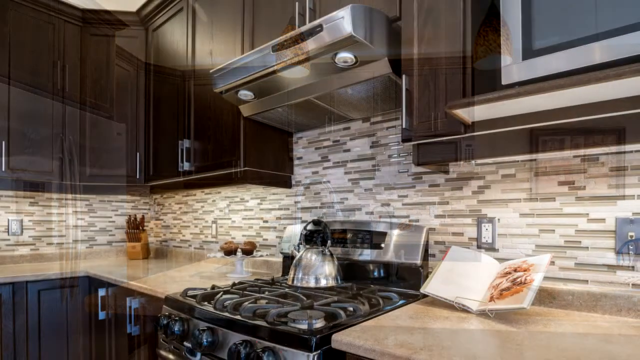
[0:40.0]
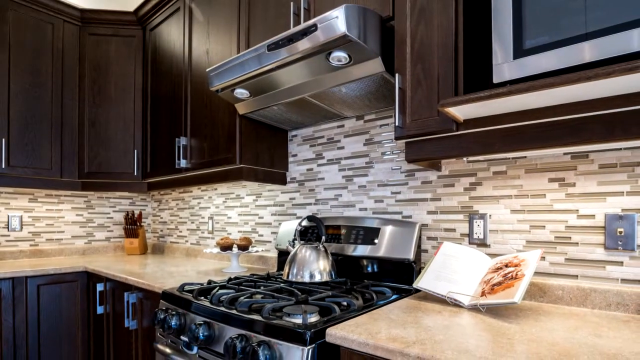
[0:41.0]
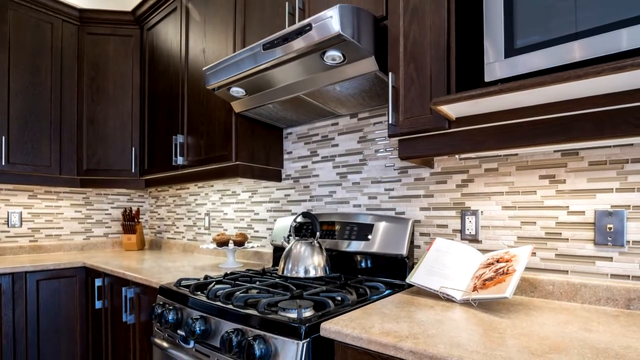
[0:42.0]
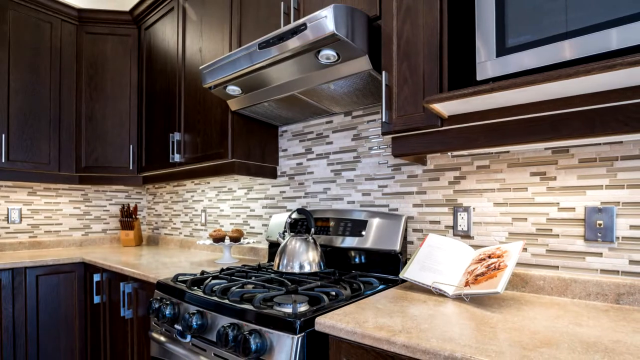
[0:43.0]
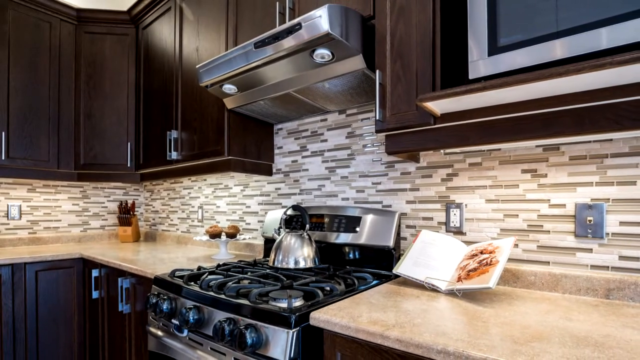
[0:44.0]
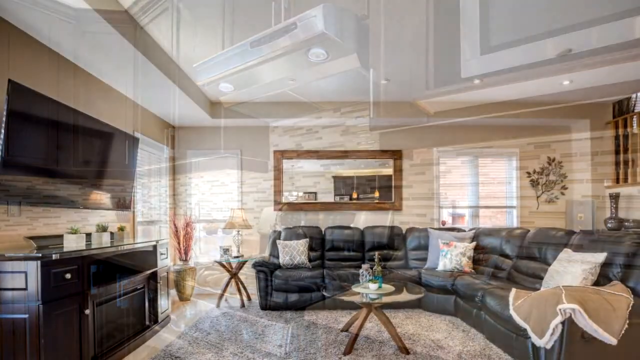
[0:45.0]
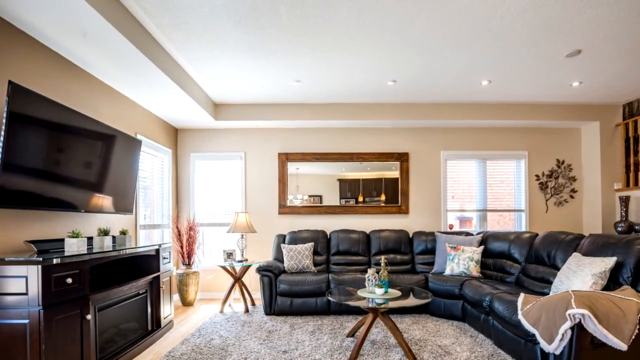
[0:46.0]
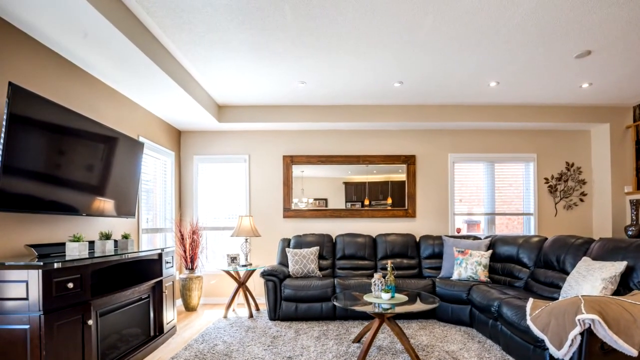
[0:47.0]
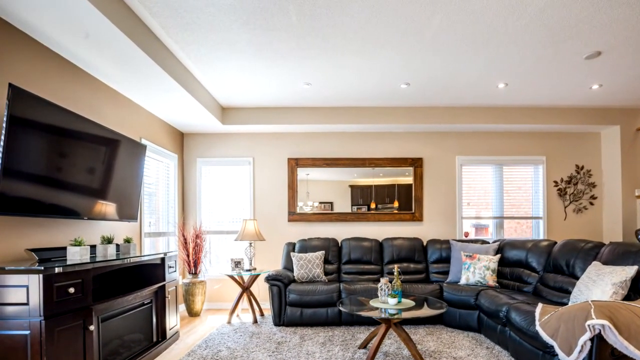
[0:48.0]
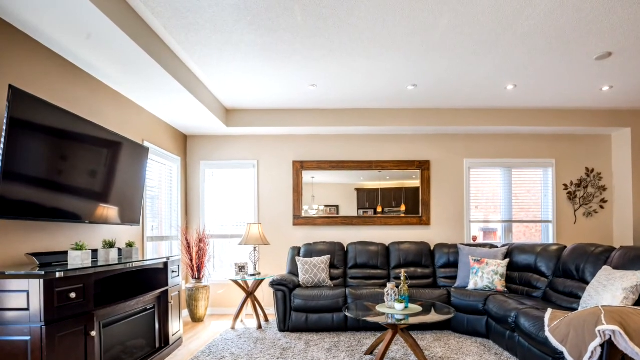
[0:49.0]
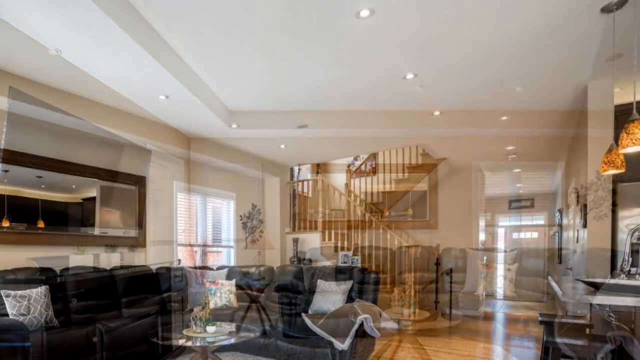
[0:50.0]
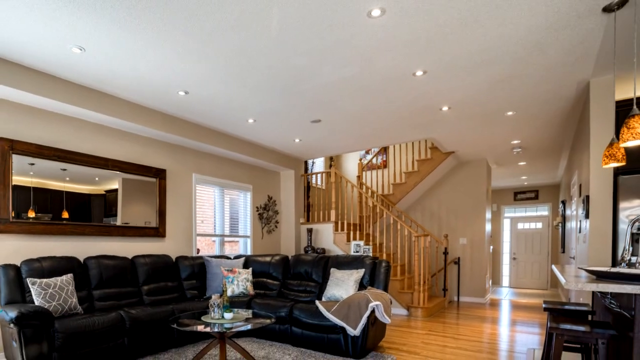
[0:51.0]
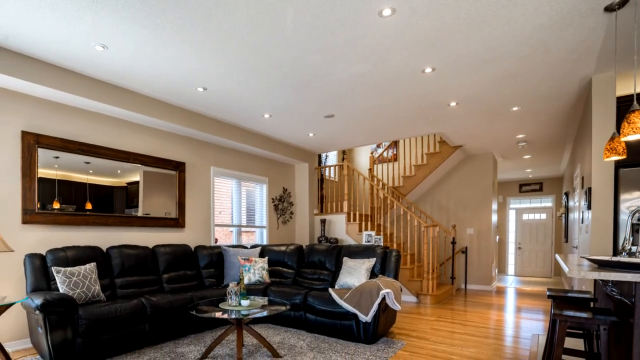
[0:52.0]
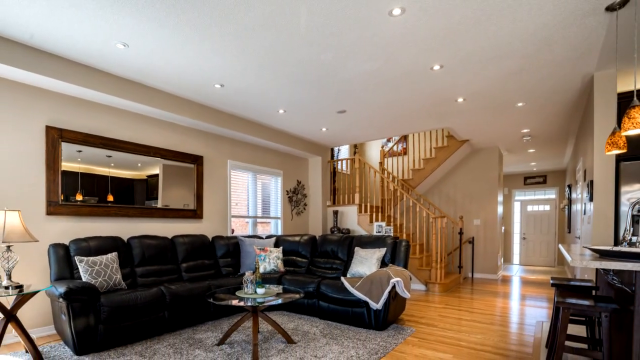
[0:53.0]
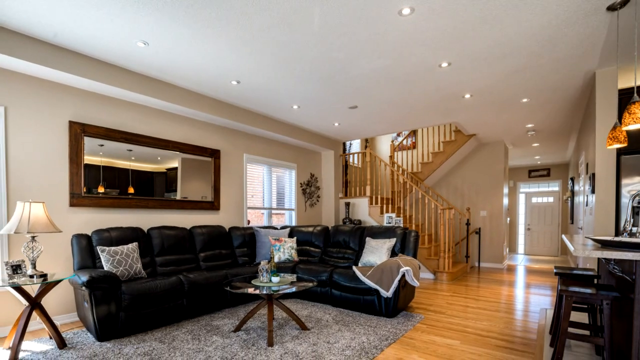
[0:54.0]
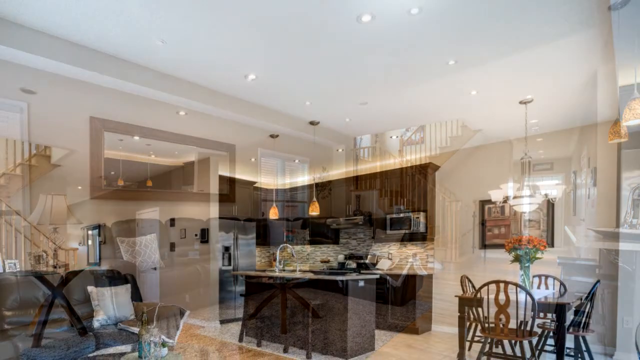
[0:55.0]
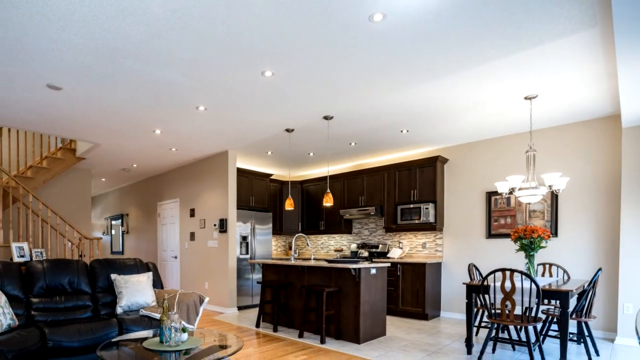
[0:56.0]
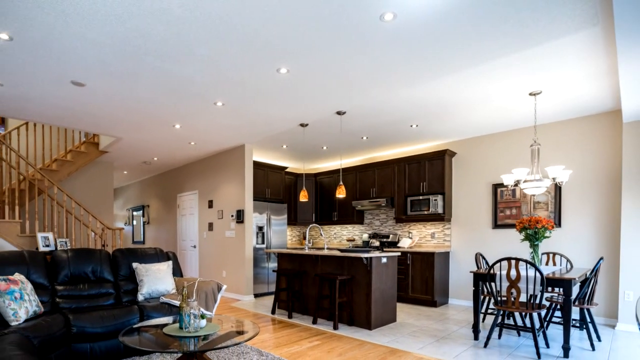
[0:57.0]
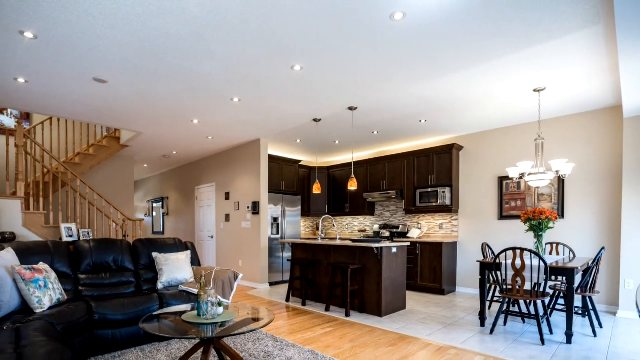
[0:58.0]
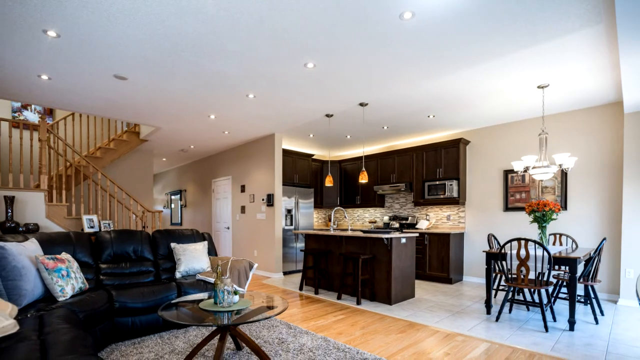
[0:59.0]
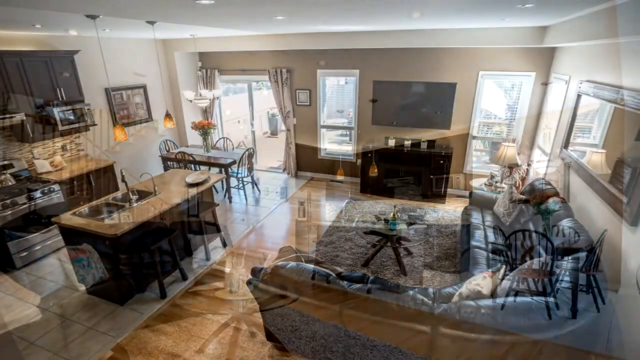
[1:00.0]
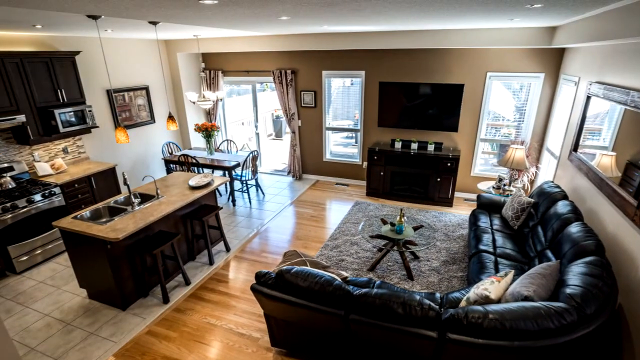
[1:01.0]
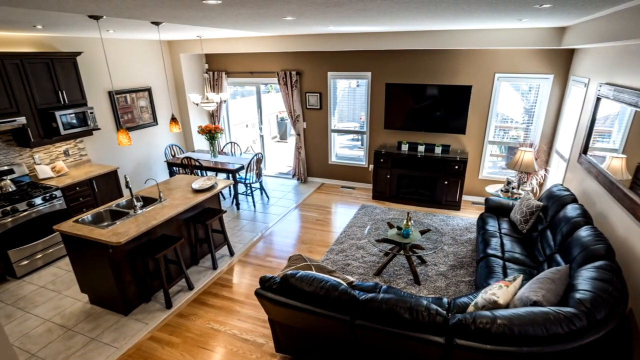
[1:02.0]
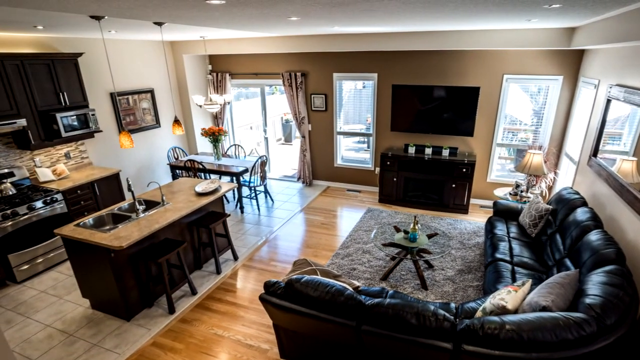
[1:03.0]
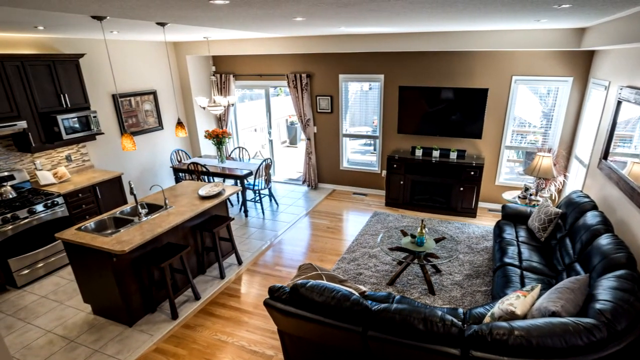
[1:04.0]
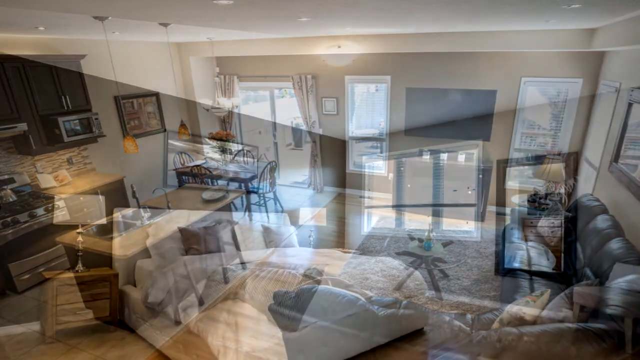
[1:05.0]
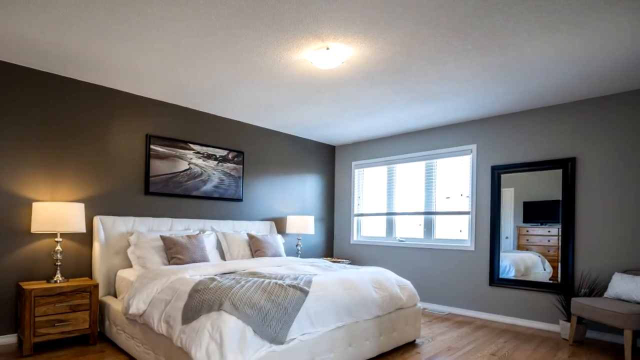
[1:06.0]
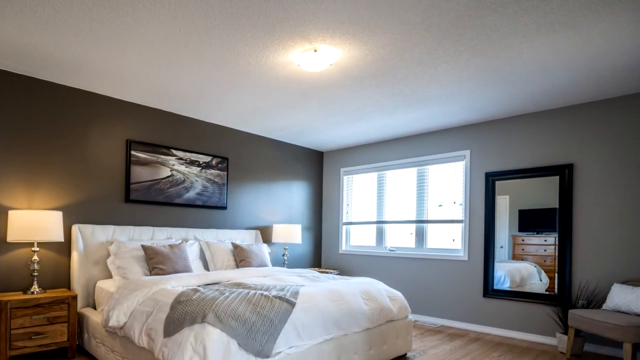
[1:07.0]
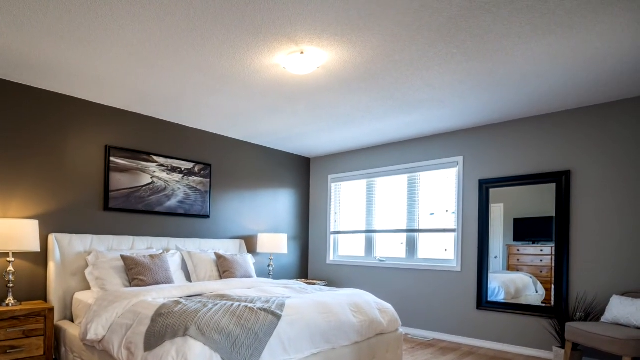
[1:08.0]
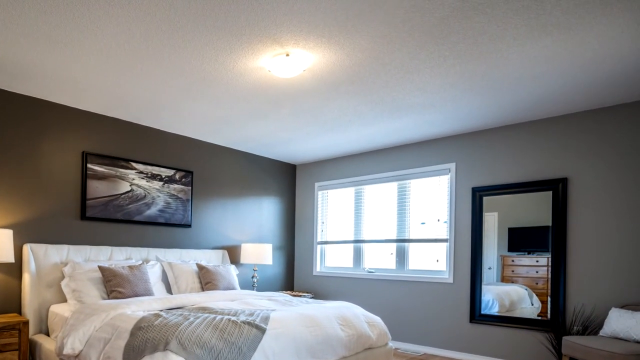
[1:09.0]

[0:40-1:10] In the kitchen of the house, a close-up shot shows a high-class oven and stove combo with two exhaust fans combined with lights above. Dark brown cabinets are seen throughout the kitchen. A transition shows a large living room with a leather sectional couch in front of a large TV hung on the wall. The TV is above an entertainment system made of dark brown wood. The living room walls are light cream and the ceilings are white. Another transition shows the room from an alternate angle, revealing an L-shaped staircase leading to a second floor. Throughout the living room and house there are many lights set into the ceiling, and windows allow natural light to come through.